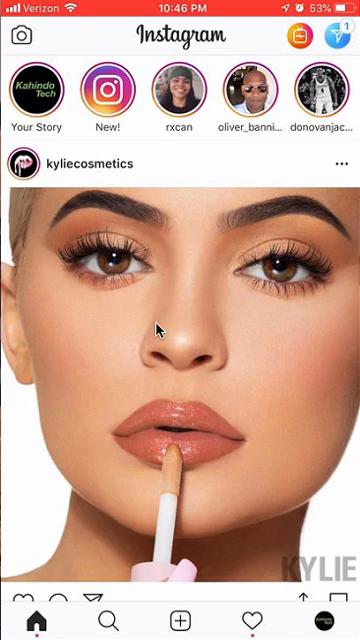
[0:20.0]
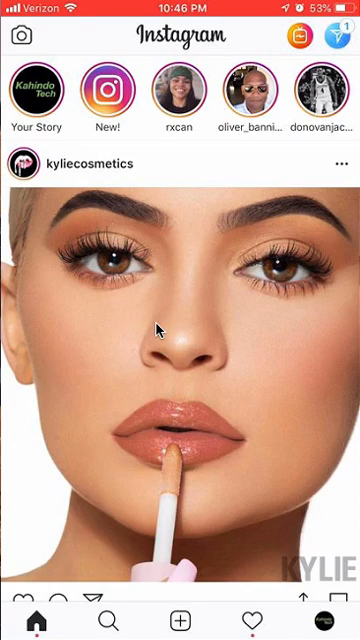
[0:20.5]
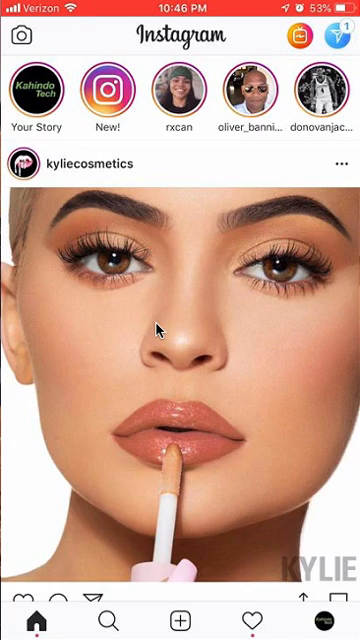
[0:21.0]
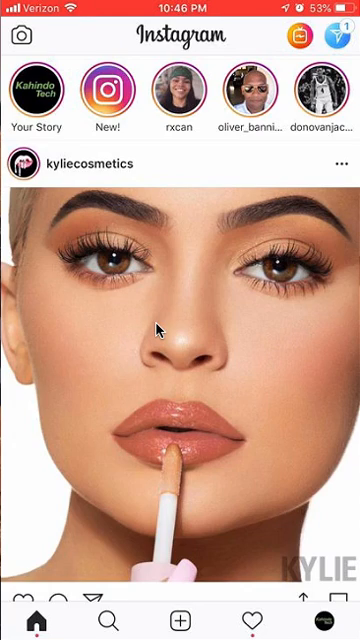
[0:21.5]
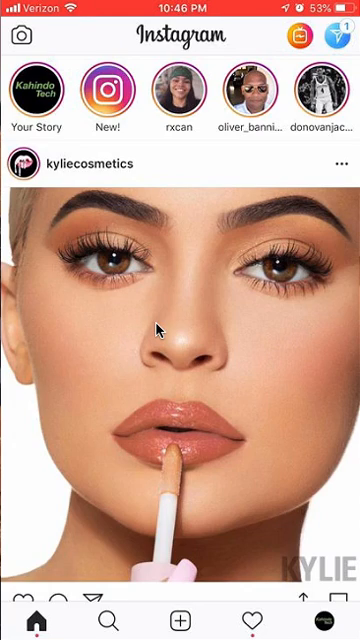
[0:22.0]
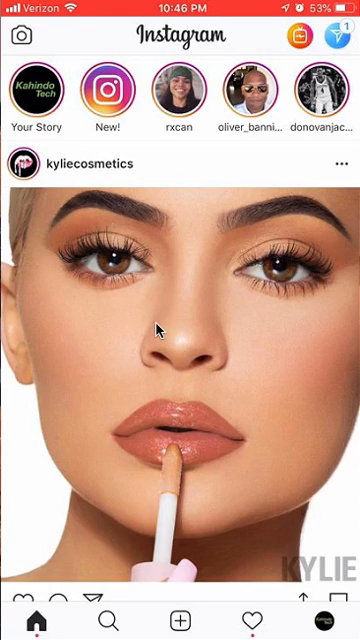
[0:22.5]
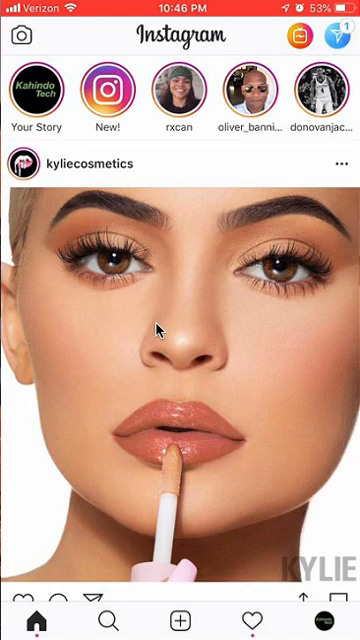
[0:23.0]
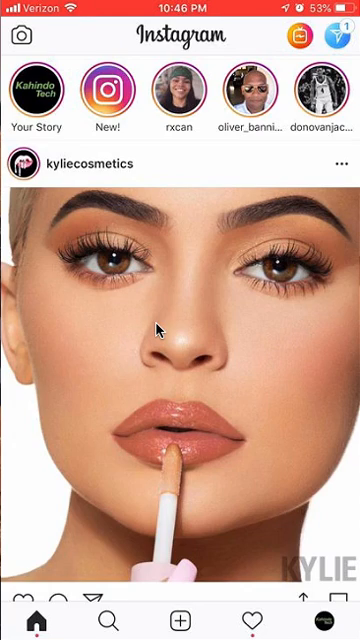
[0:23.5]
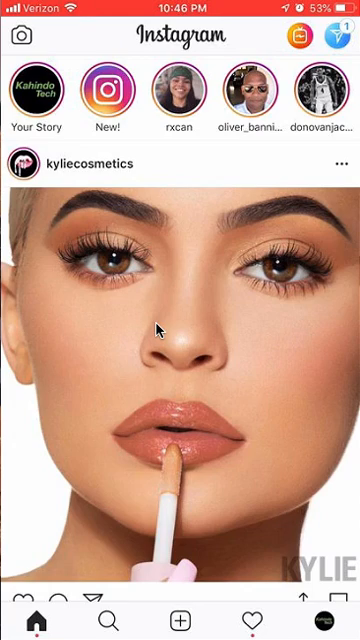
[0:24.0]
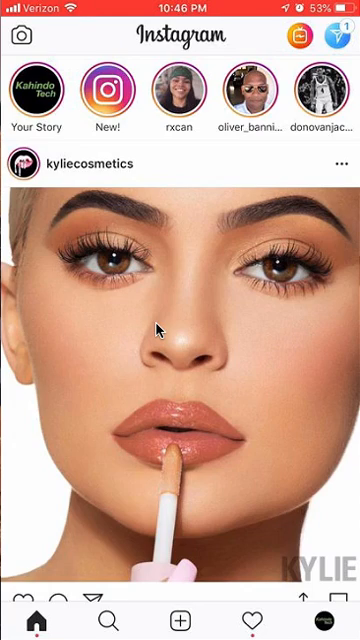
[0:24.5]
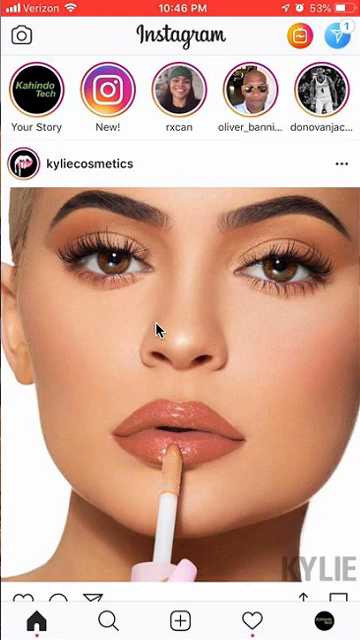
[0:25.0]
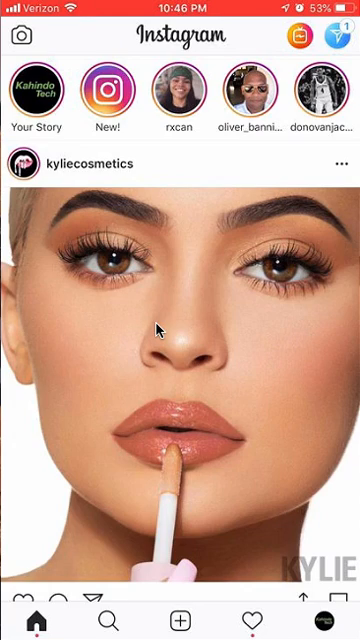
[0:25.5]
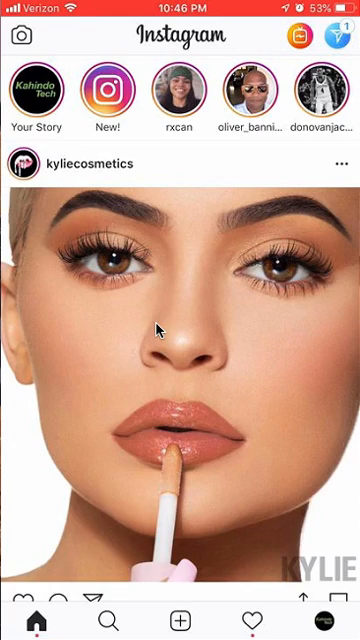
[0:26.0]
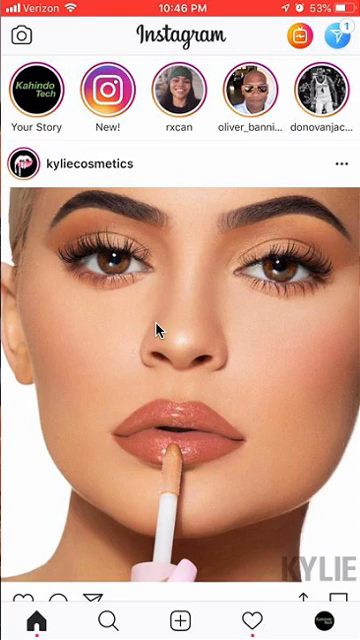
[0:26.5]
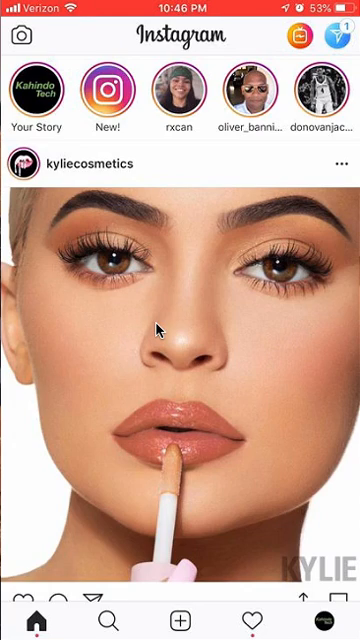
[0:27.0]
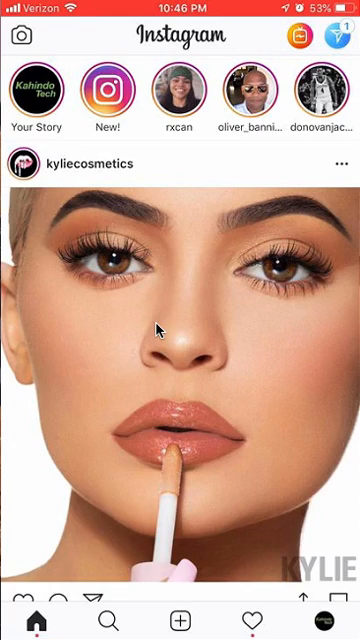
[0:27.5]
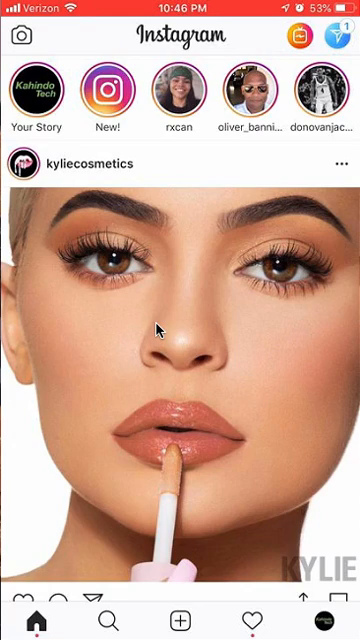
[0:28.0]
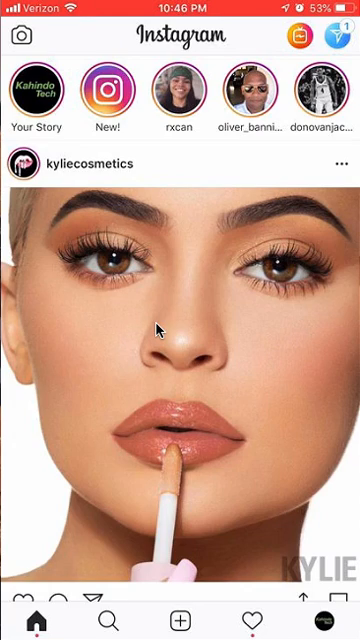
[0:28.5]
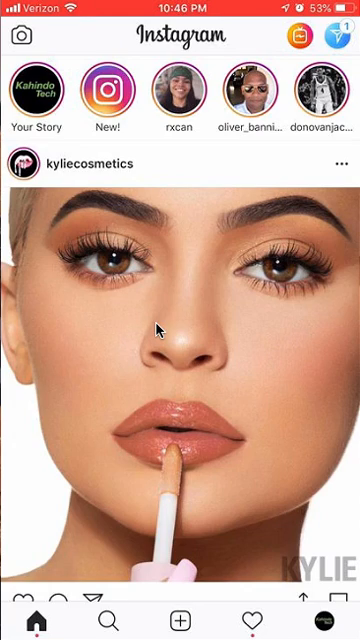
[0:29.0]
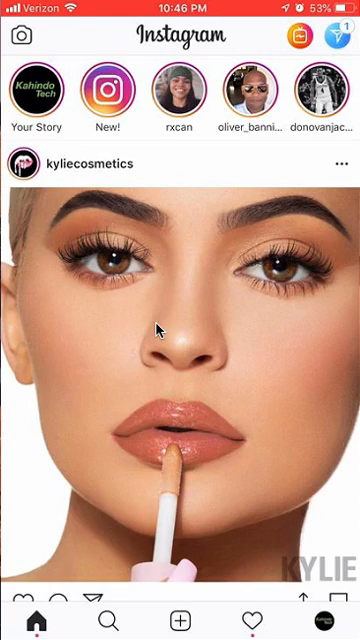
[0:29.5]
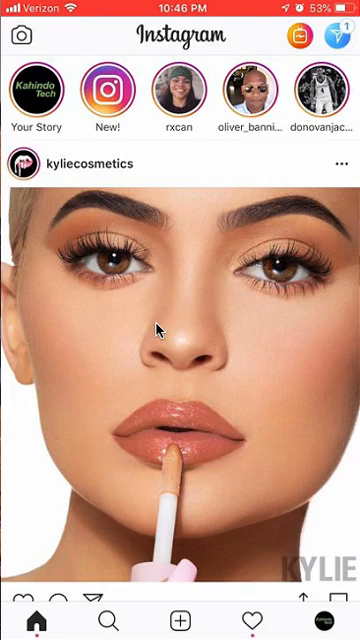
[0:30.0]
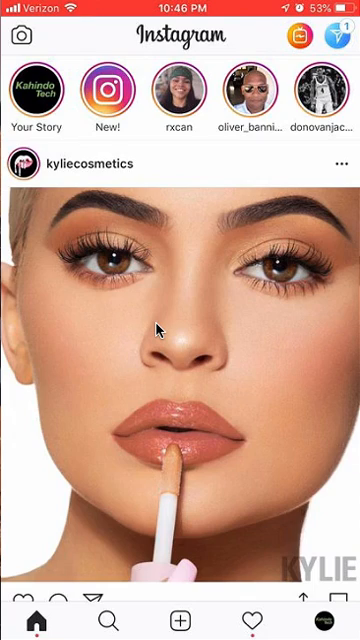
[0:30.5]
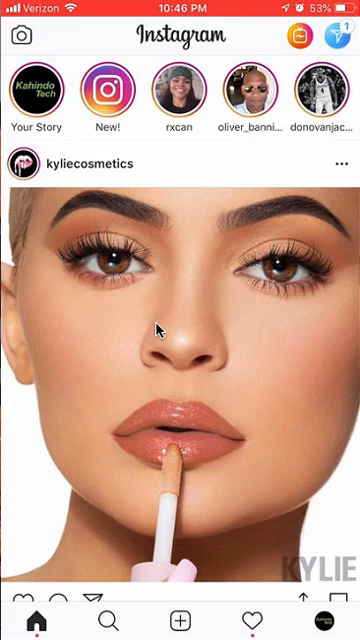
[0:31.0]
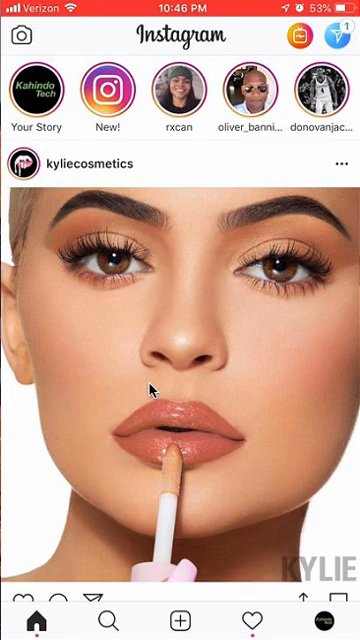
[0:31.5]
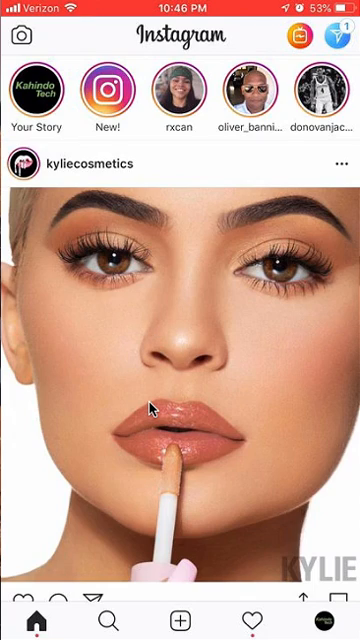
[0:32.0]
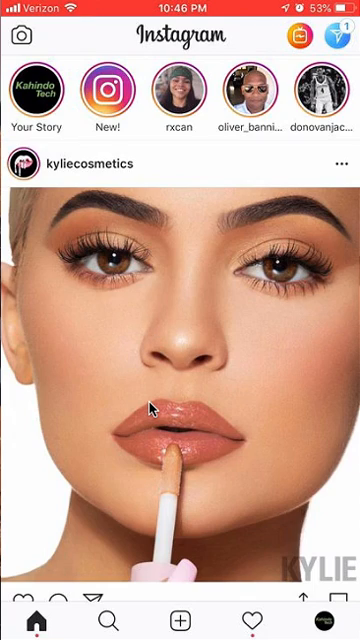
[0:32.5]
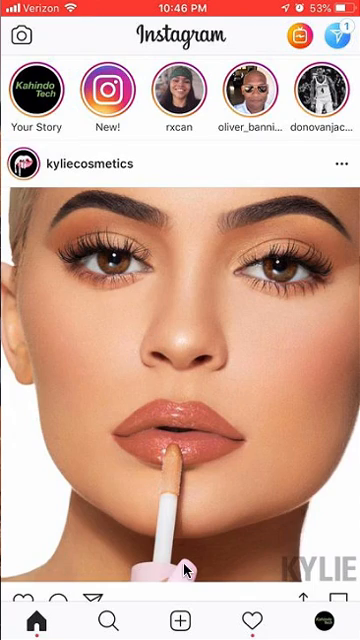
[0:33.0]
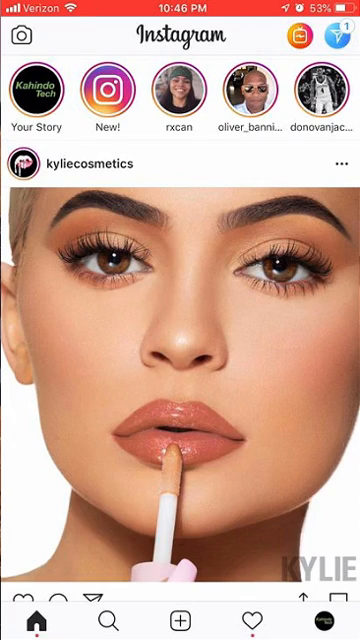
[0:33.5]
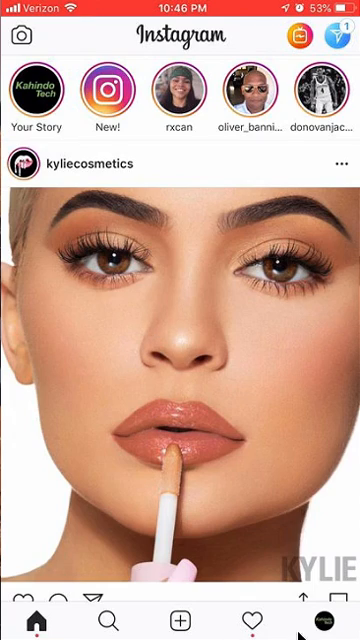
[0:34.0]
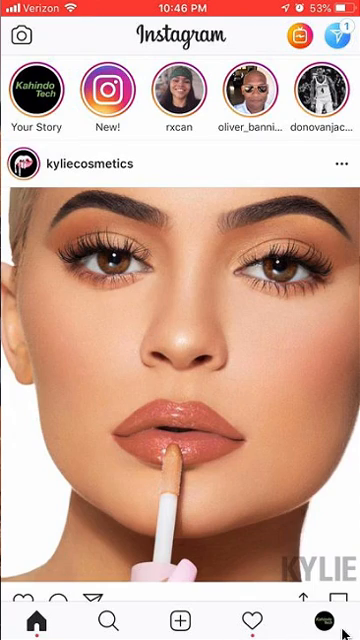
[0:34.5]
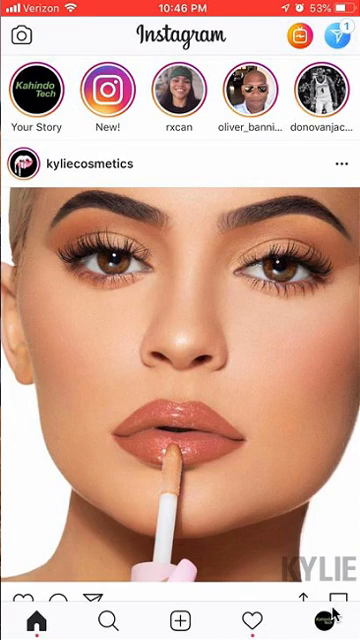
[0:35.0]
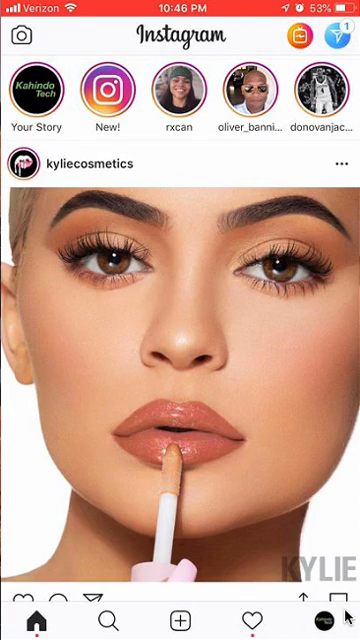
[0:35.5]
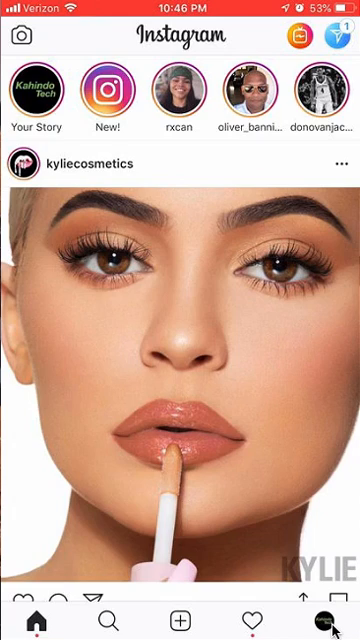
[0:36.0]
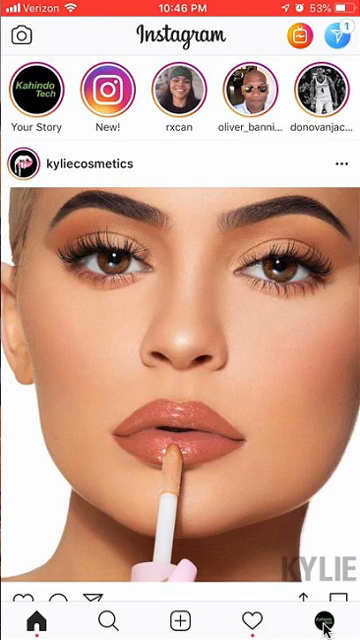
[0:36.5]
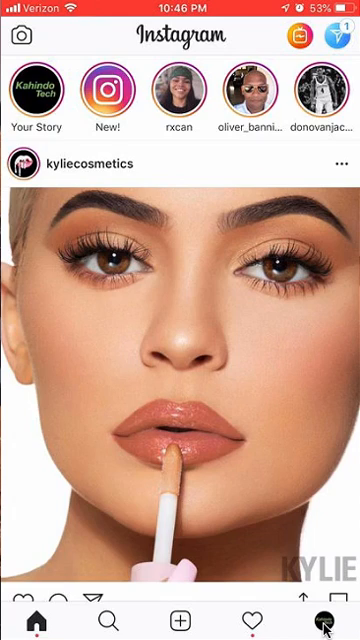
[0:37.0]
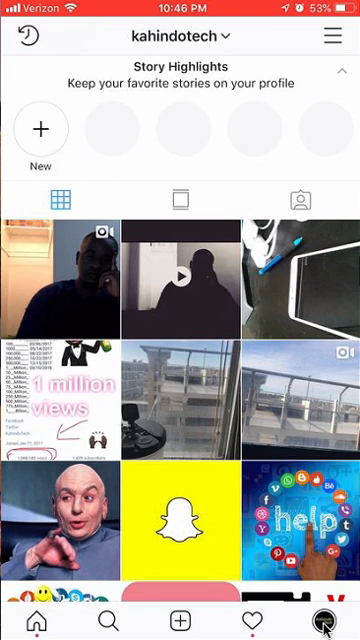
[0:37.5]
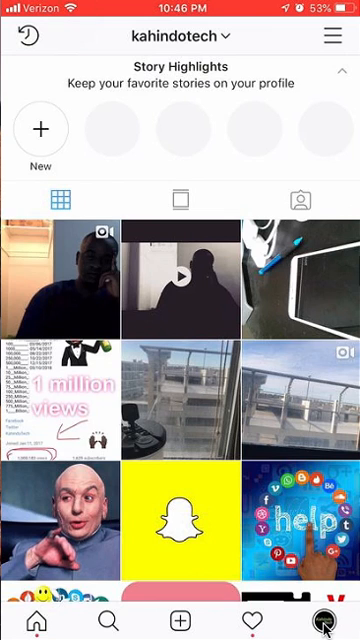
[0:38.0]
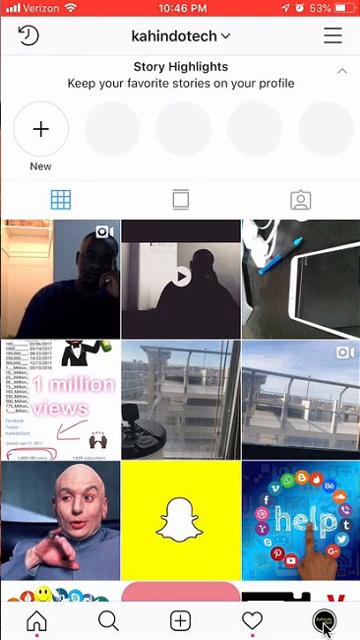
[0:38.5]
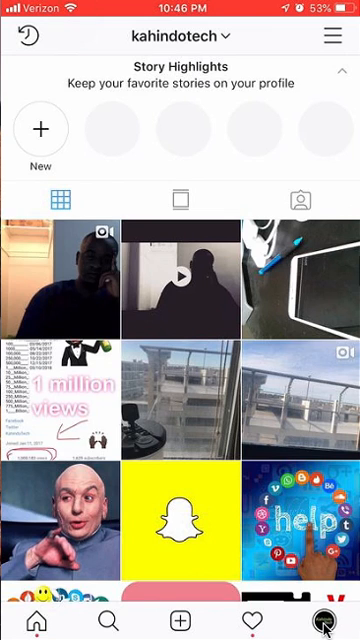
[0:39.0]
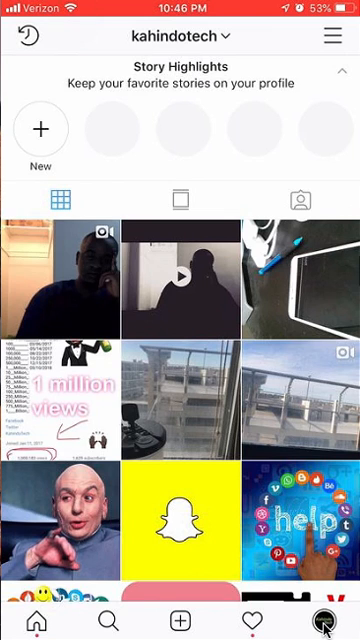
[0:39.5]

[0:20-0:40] An Instagram page for Kylie Cosmetics is displayed on a screen shaped like a mobile device. Across the top, on a red horizontal bar, the time reads 10.45 PM. Above the image of Kylie are five other channels. Kylie Jenner stares straight ahead in her image. She has brown eyes, dark eyebrows, and glossy lipstick in a coppery brown shade with a hint of pink, and the lip gloss stick is pressed against her lower lip. Her lashes look thick. In the lower right corner of the screen, gray text reads "Kylie". This view remains on the screen.